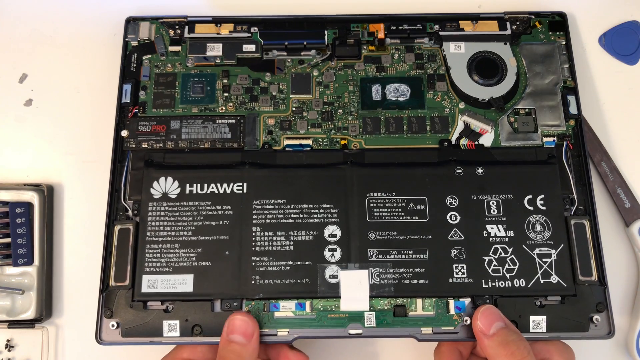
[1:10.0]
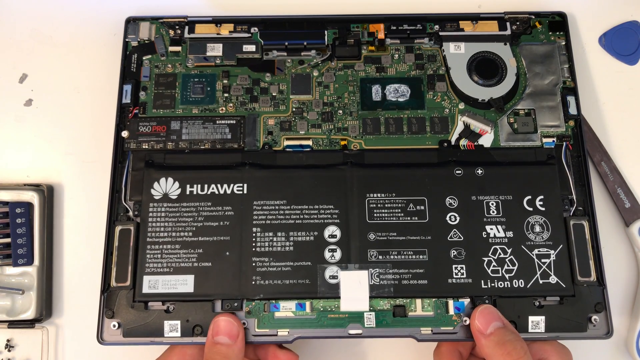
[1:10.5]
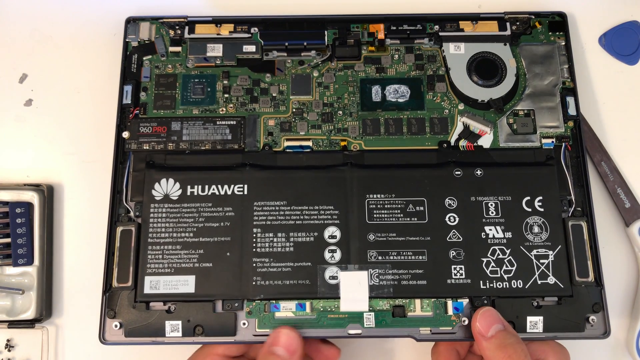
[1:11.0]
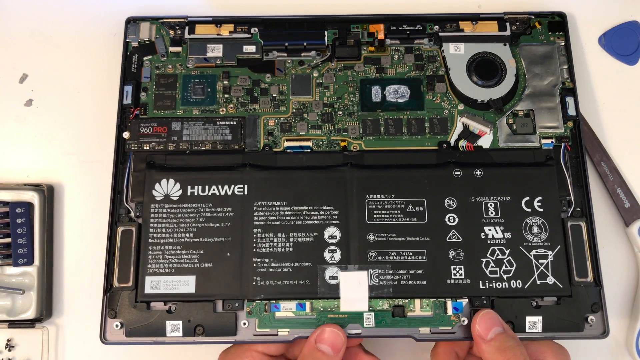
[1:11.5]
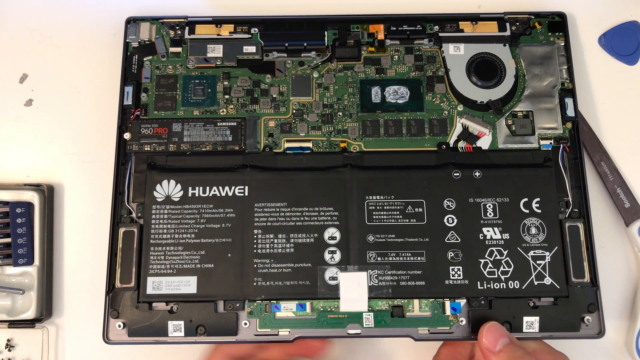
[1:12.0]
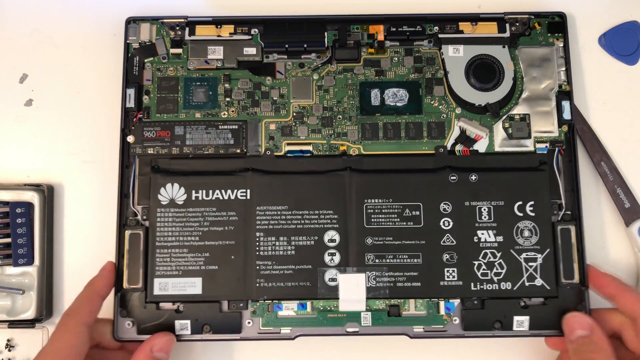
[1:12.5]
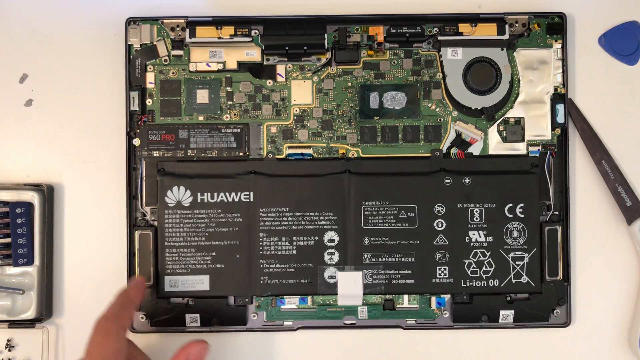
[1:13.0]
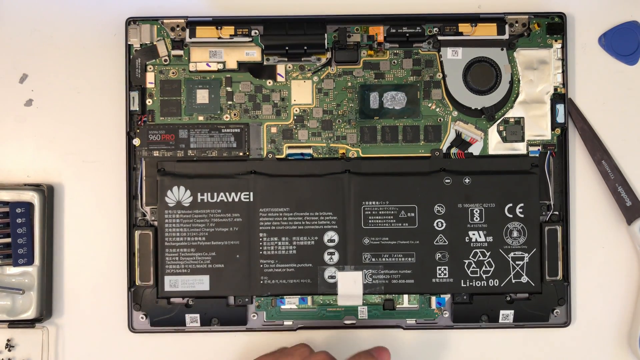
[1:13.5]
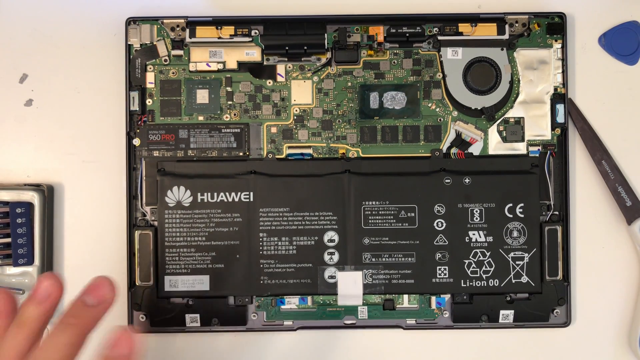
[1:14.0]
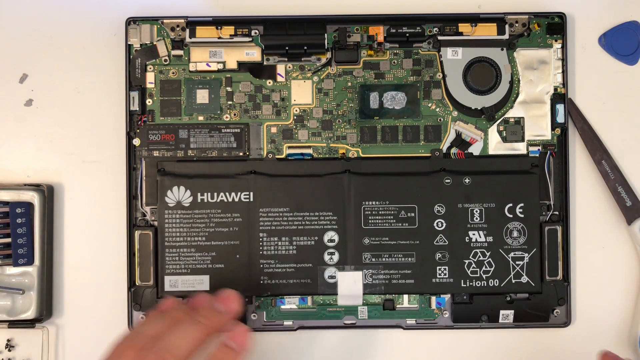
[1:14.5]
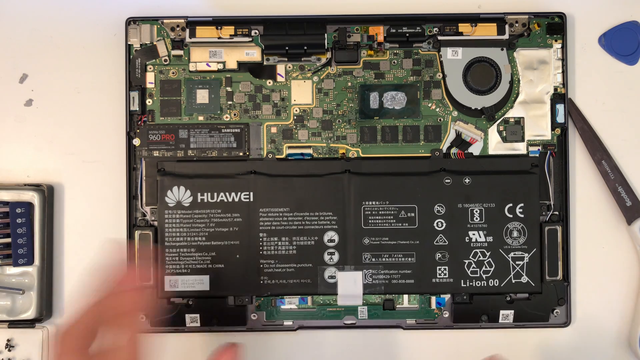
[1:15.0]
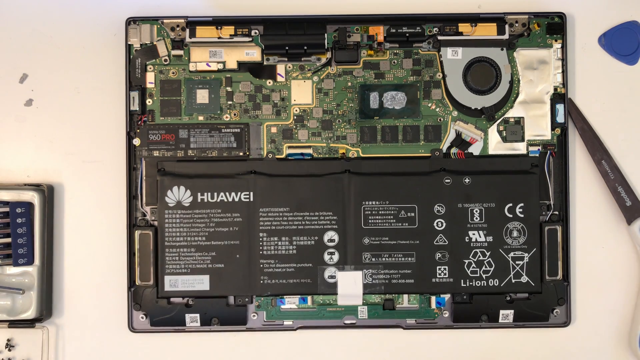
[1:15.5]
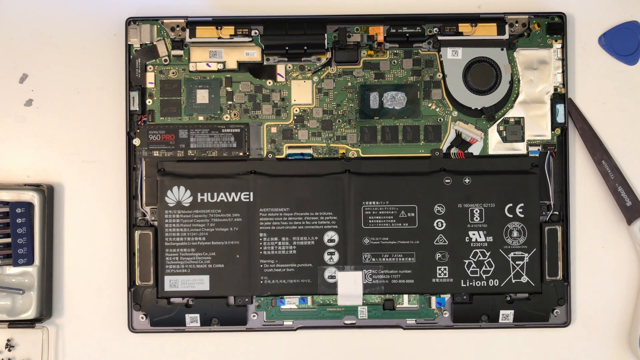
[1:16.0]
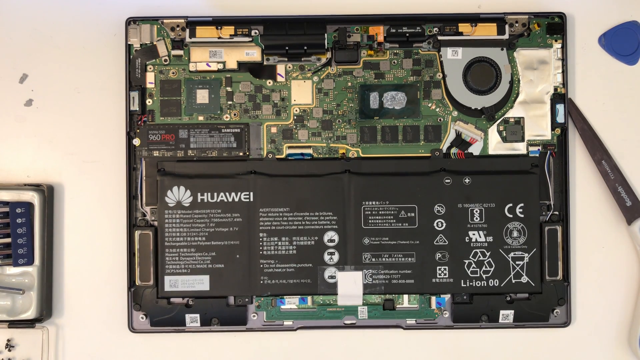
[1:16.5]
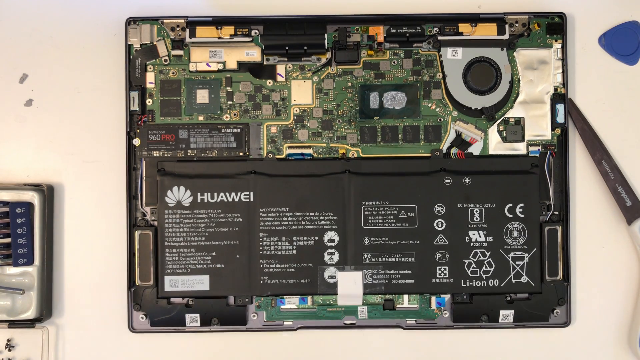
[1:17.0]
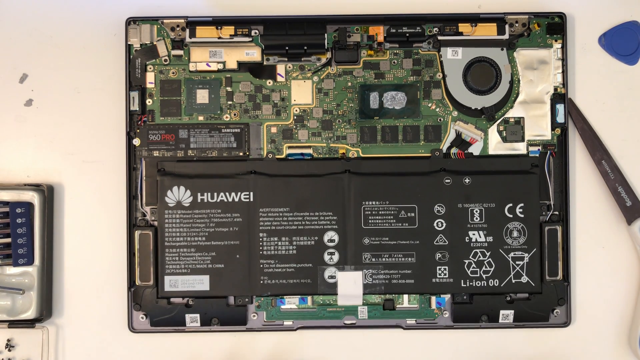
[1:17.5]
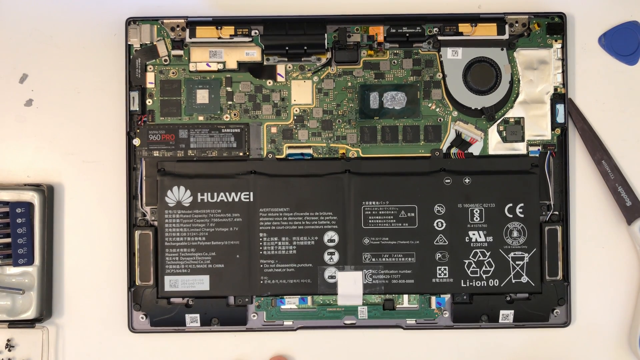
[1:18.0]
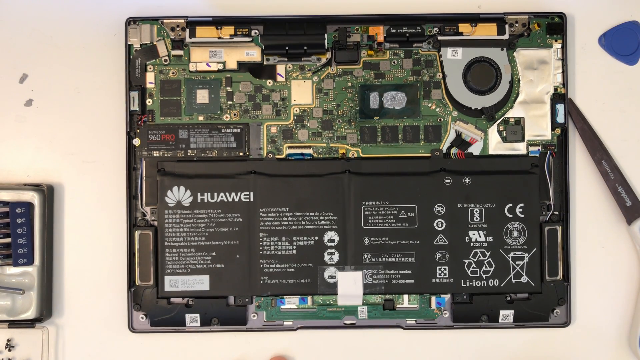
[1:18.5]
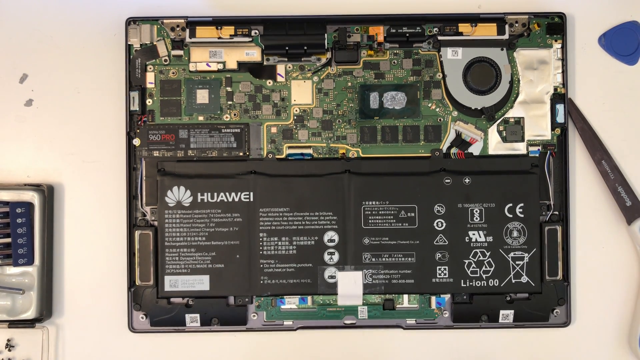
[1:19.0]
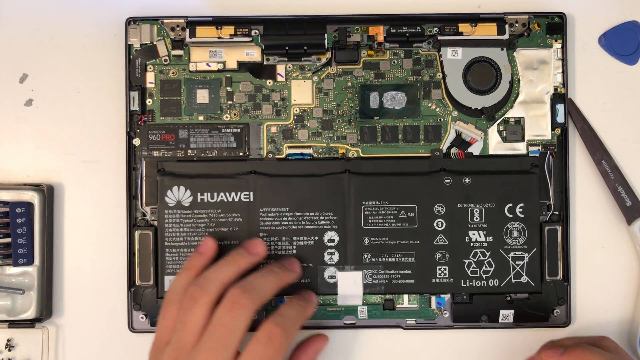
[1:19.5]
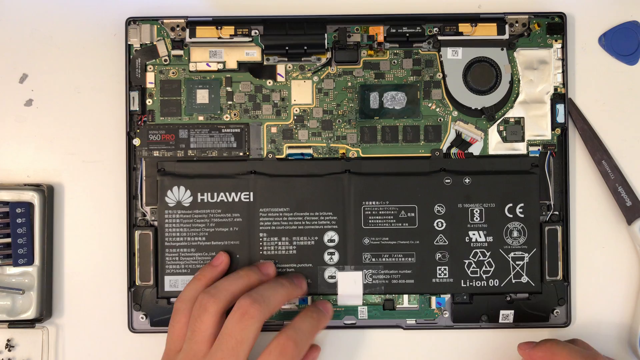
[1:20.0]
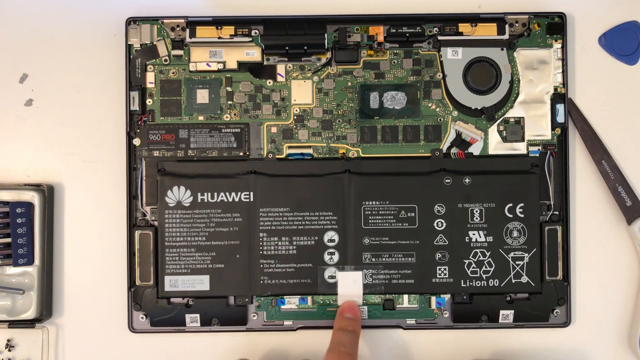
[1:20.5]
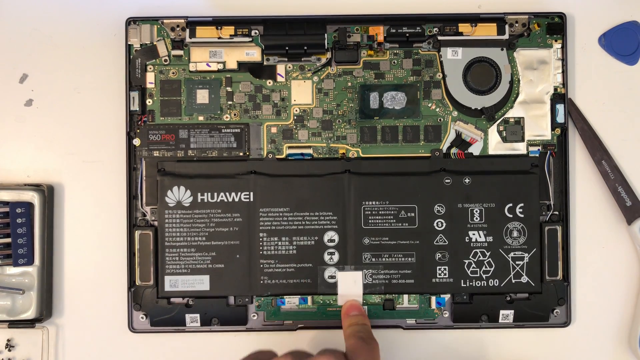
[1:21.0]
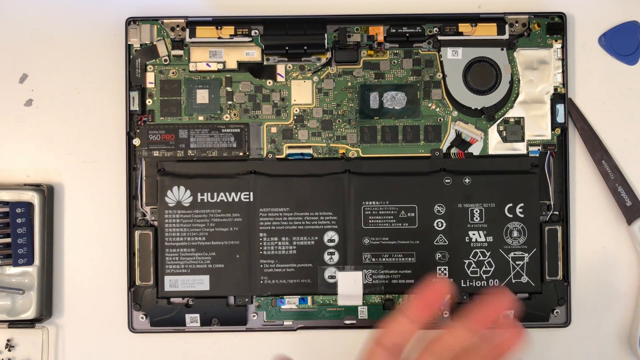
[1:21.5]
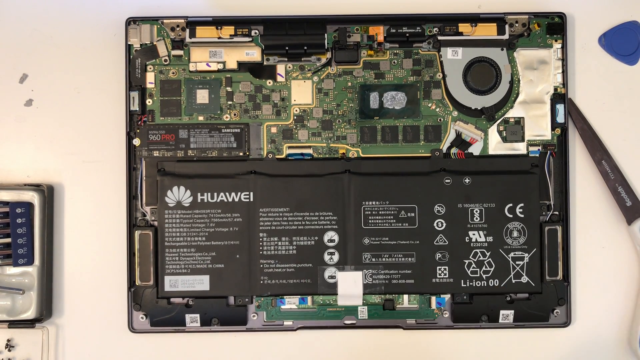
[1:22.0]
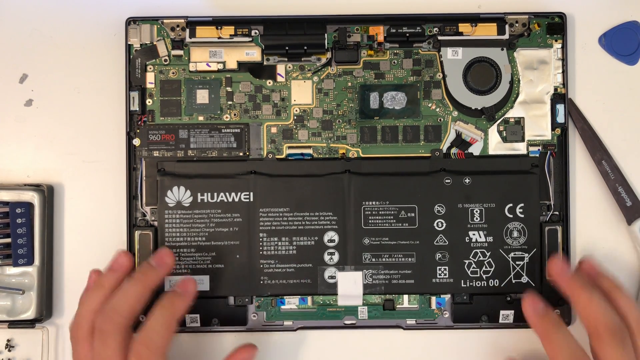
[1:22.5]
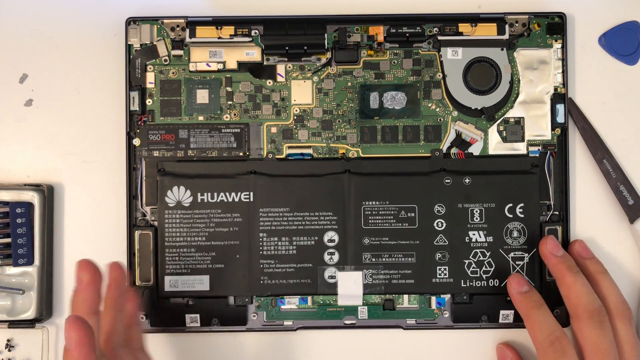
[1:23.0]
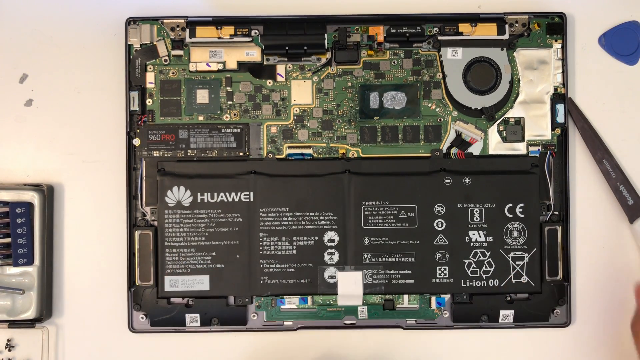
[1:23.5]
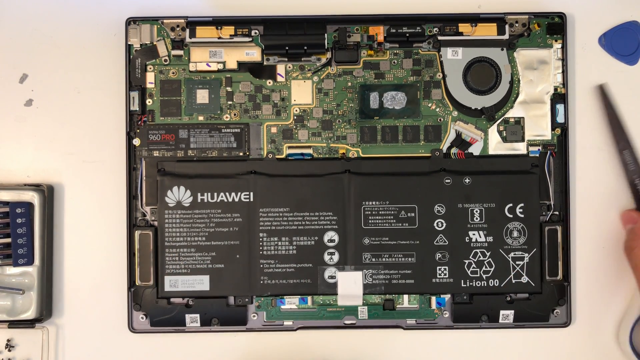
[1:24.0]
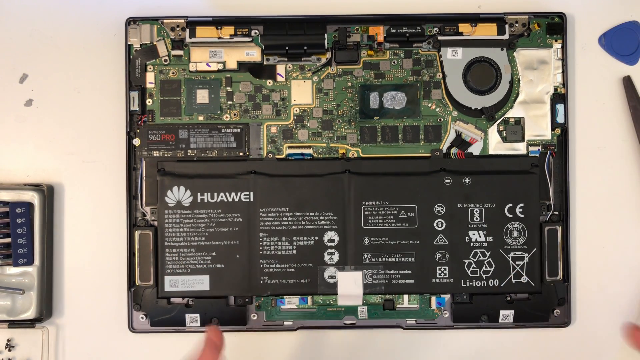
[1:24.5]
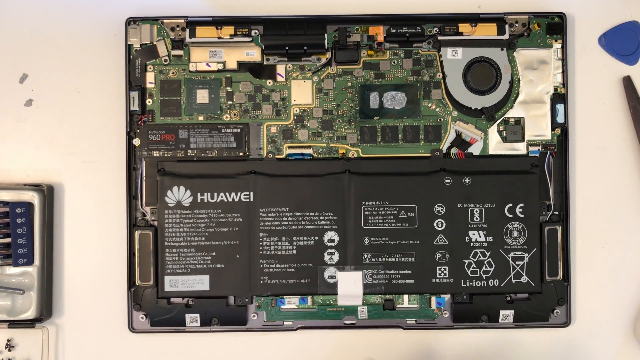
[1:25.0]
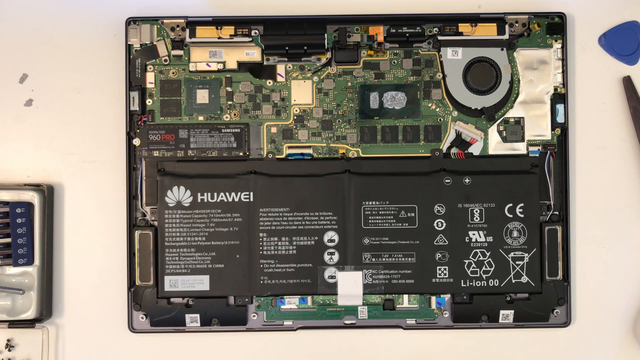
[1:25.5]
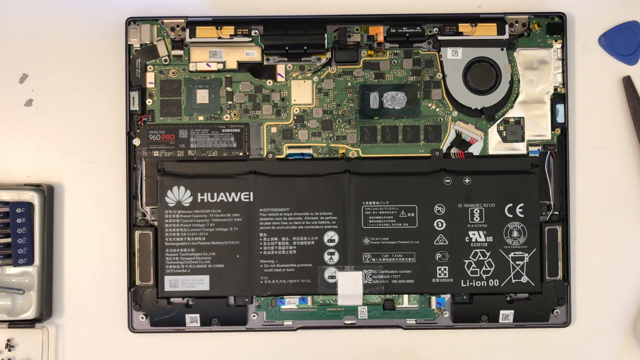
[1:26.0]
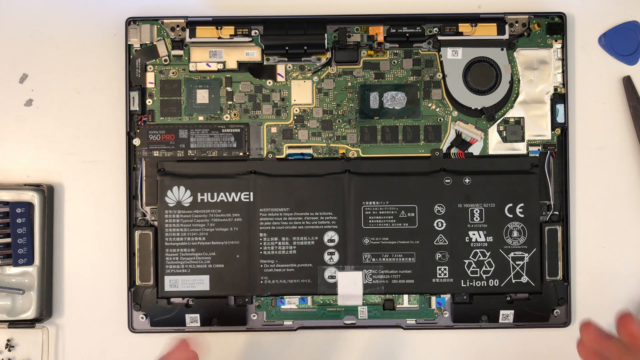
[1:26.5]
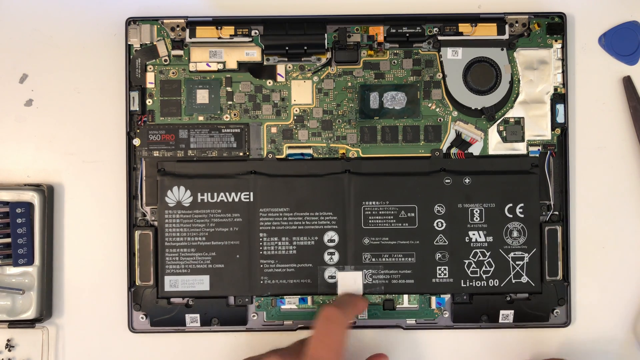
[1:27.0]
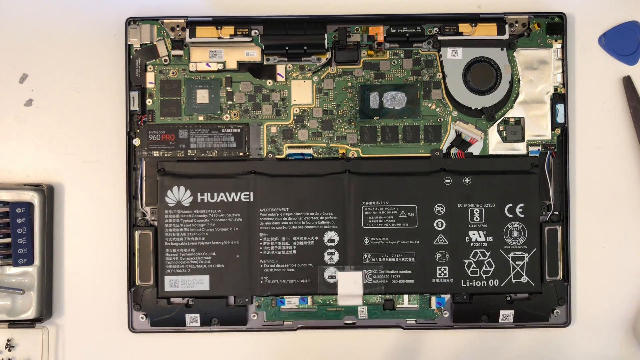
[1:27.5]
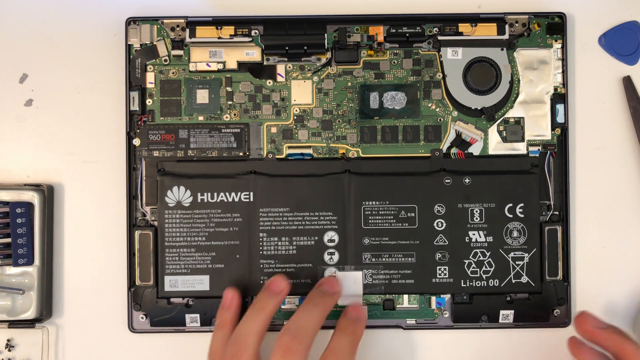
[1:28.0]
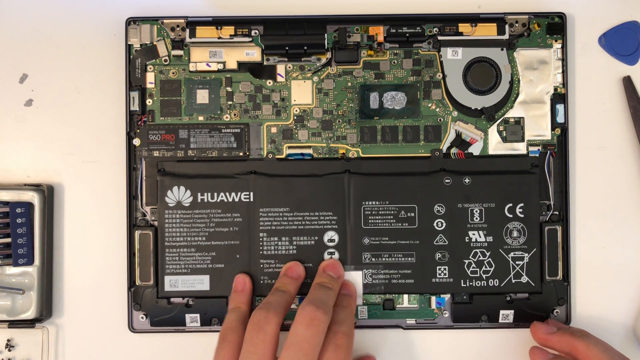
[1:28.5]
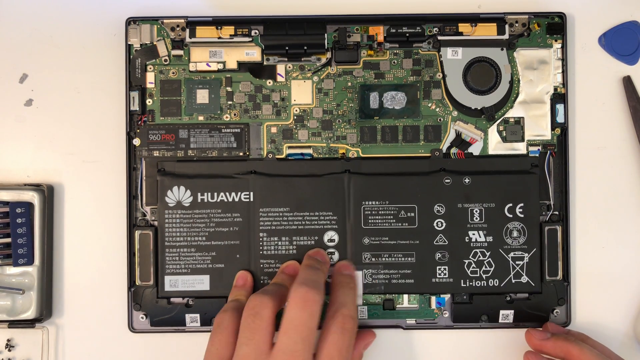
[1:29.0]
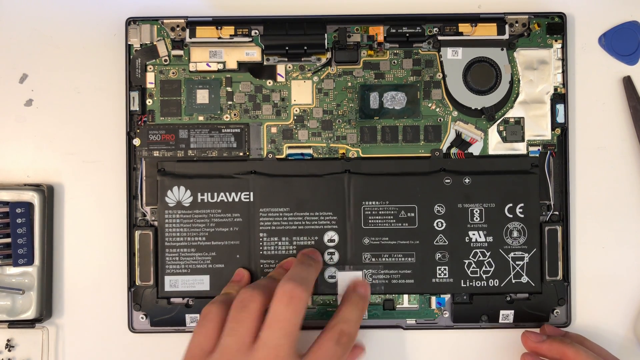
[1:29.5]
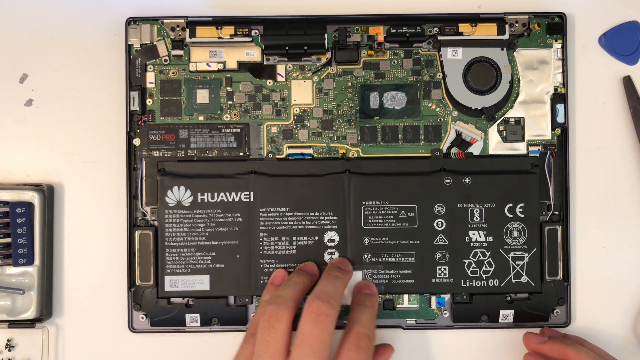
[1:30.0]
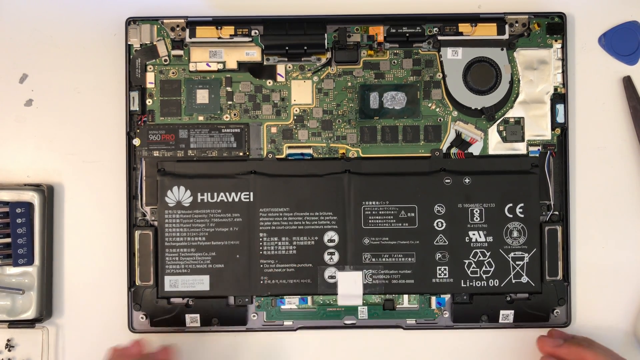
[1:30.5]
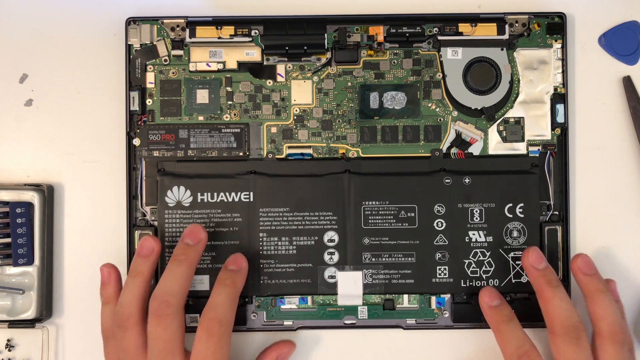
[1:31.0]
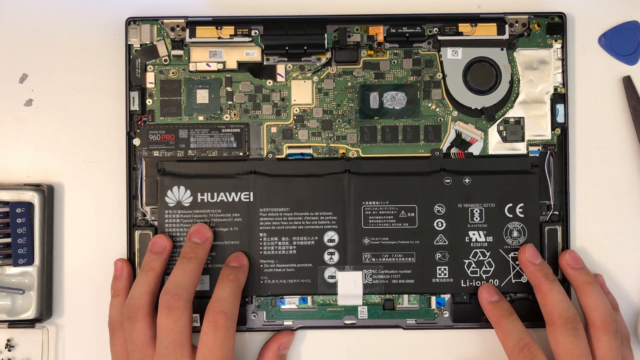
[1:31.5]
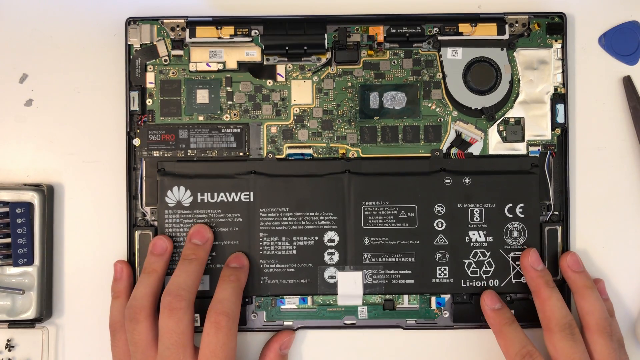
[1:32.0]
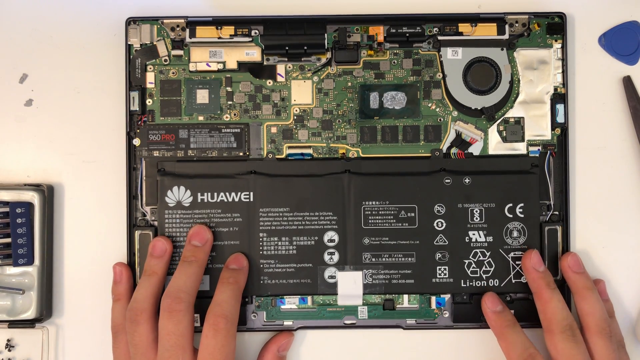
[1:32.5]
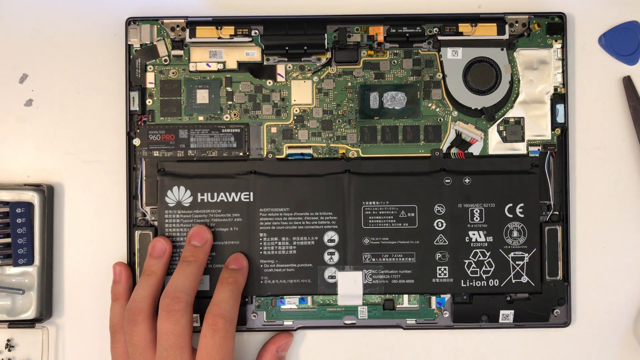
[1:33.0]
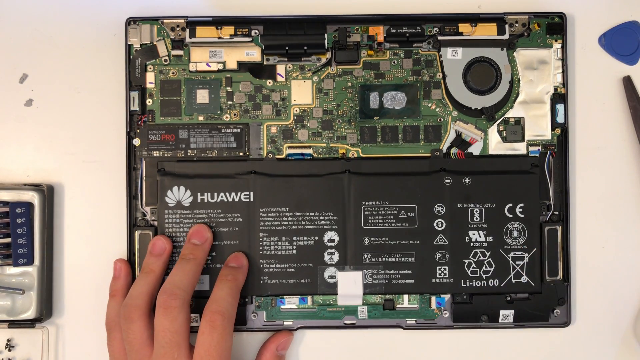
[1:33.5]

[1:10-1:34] Someone handles an exposed computer, with its electrical components and battery visible. Besides the computer, three objects are on screen: on the right, a pair of scissors and a small blue triangle, and on the left, a gray, white and blue electrical device. The person holds the middle of the screen with their thumbs, pressing along the top edge of the open computer. They wave their left hand a few times over the left corner of the computer, and then their hands are off screen for a bit. The left hand comes back and presses toward the middle of the computer at the bottom of the frame, toward a white piece of paper. With the right hand they slide the scissors just off screen, so only a small portion of the tip is visible. They place their left hand in the middle of the computer near the white rectangle and press it down, then place both hands on the bottom corners of the computer and take the right hand off.